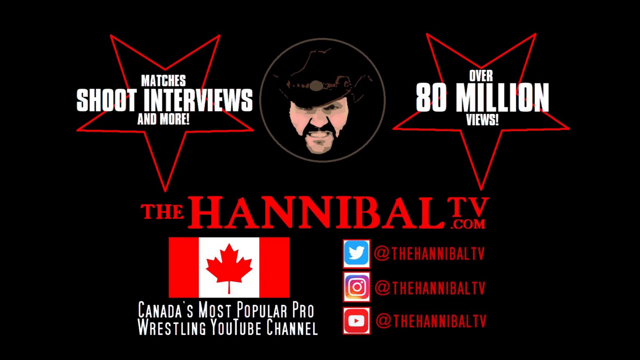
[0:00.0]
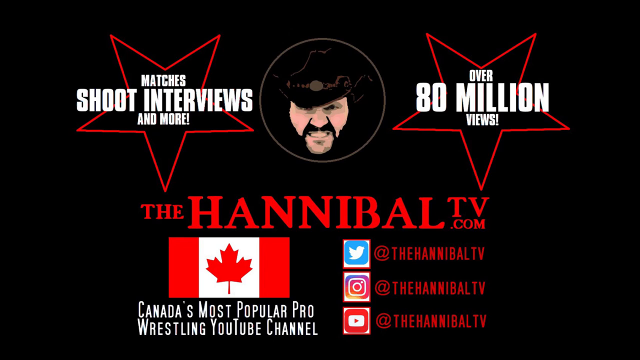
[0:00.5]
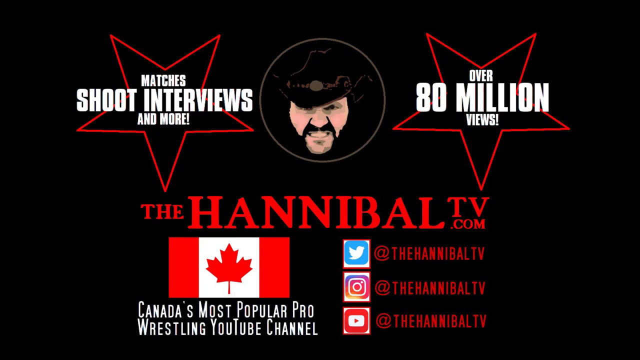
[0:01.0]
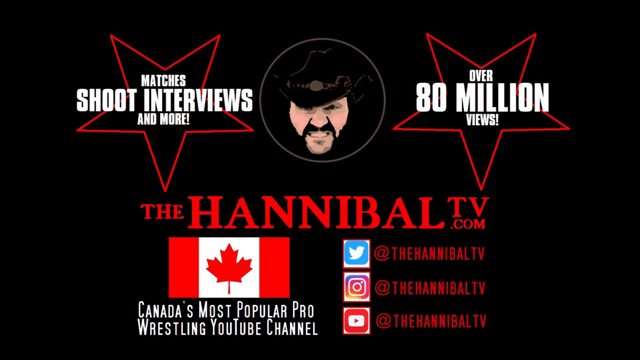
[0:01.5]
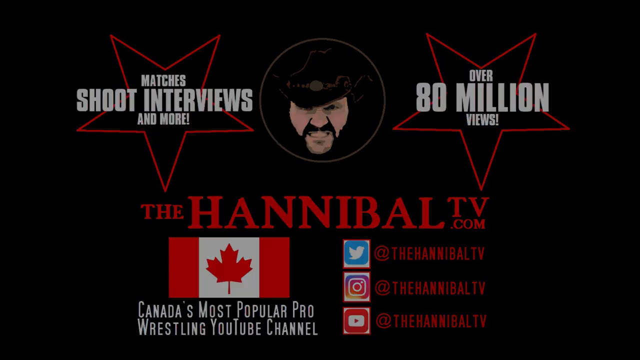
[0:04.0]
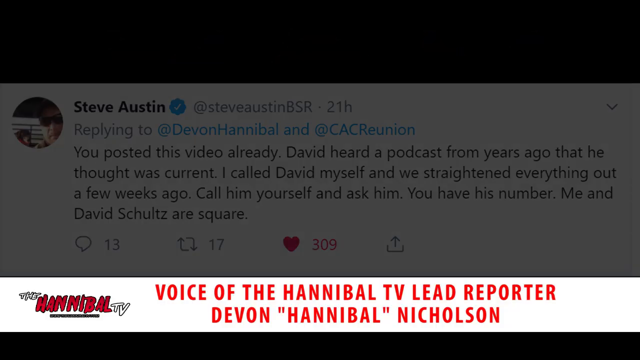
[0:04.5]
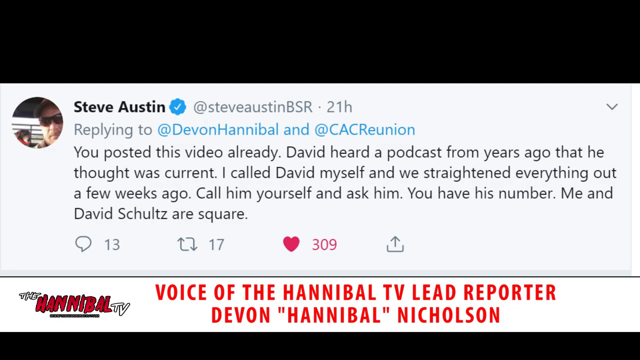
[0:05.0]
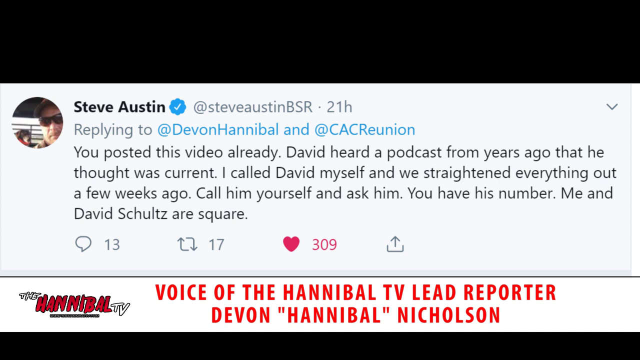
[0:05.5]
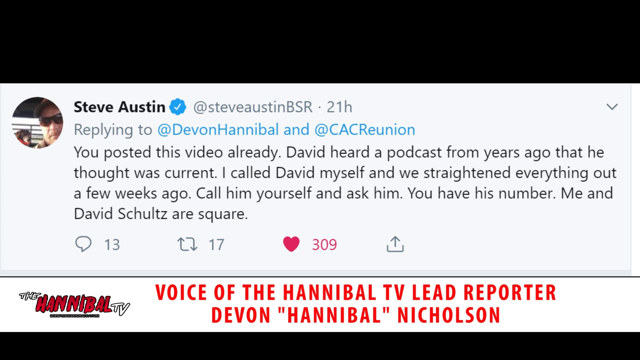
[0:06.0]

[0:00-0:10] The video opens on a black background with the outline of two stars at the top. On the left side, white text reads "matches shoot interviews and more!" and the other reads "over 80 million views!" There is an animated image of a man with a beard and mustache wearing a black cowboy hat, and underneath it red text reads "the HannibalTV.com". A Canadian flag appears on the left side below that, along with the words "Canada's most popular pro", and the screen notes that the person can be found on Twitter, Facebook and YouTube. This stays up for a few seconds, and then text appears reading "the voice of Hannibal TV lead reporter Devin Hannibal Nicholson".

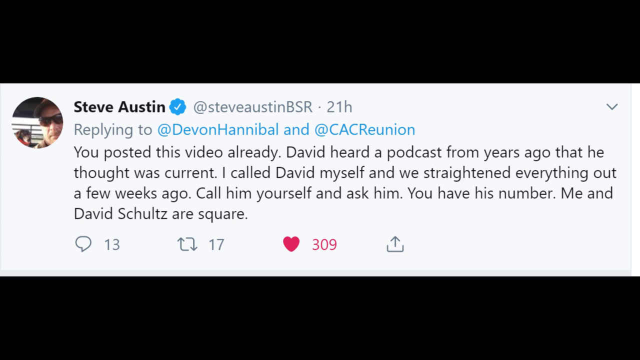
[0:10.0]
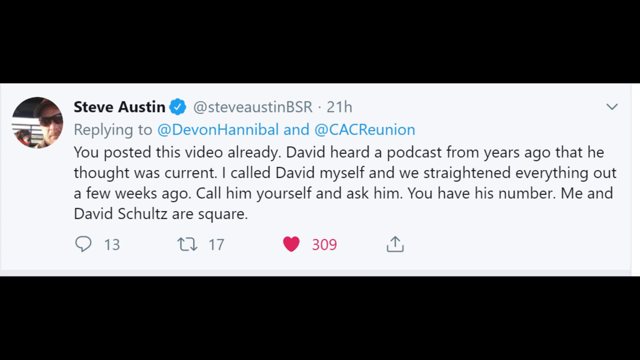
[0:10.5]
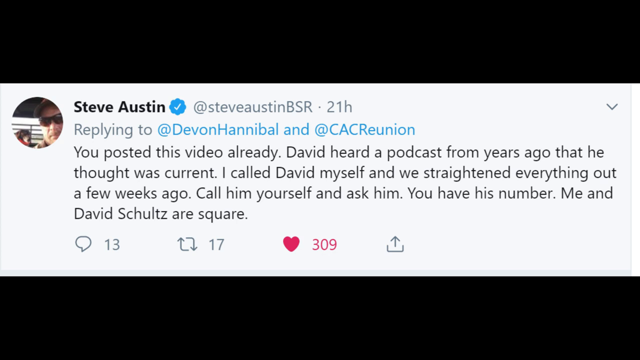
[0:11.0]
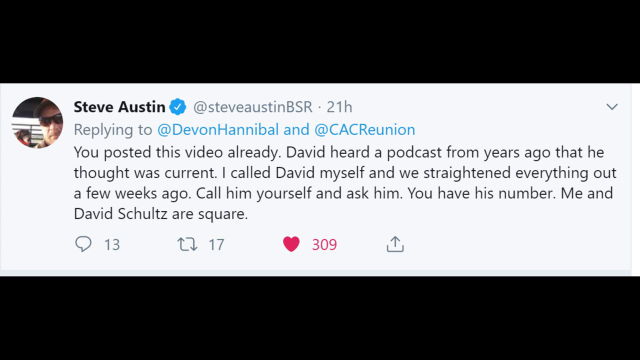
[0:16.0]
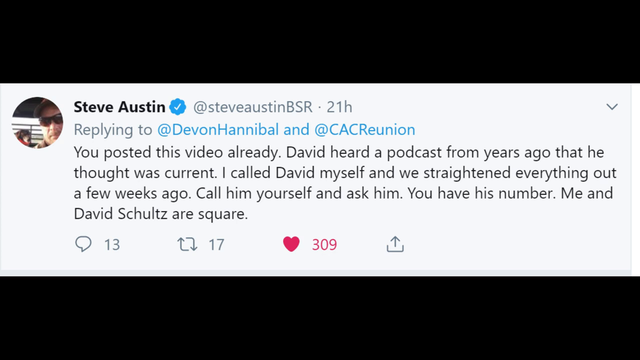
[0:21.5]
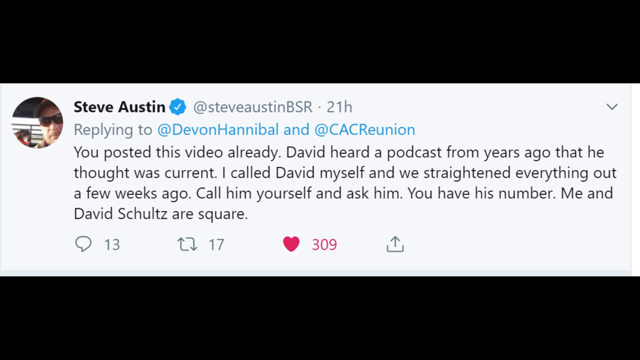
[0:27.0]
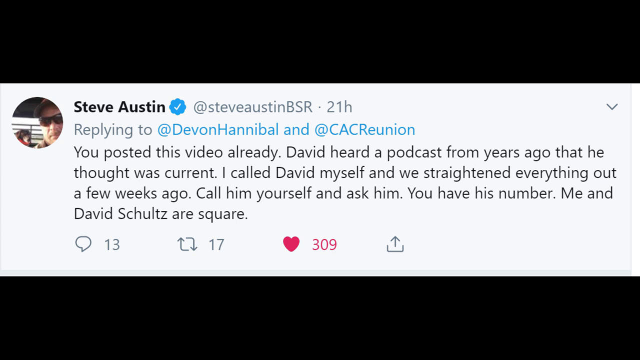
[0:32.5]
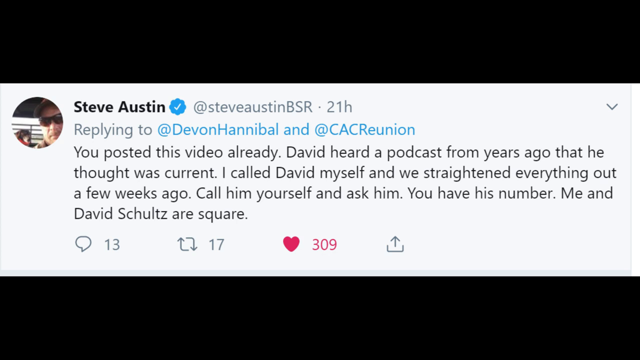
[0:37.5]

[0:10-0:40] A tweet from Steve Austin is shown, replying to Devin Hannibal and another account. In black, the tweet reads "you posted this video already. David heard a podcast from years ago that he thought was current. I called David myself and we straightened everything out a few weeks ago. Call him yourself and ask him. You have his number. Me and David Schultz". It has 13 comments, 17 retweets and 309 likes. Next to the name and handle, gray text reads "21H", showing it was posted 21 hours earlier. The tweet stays on screen for quite some time.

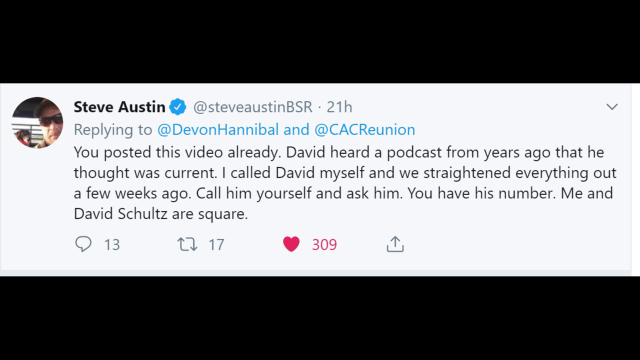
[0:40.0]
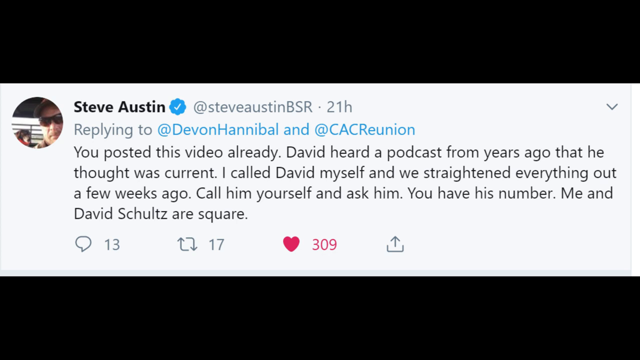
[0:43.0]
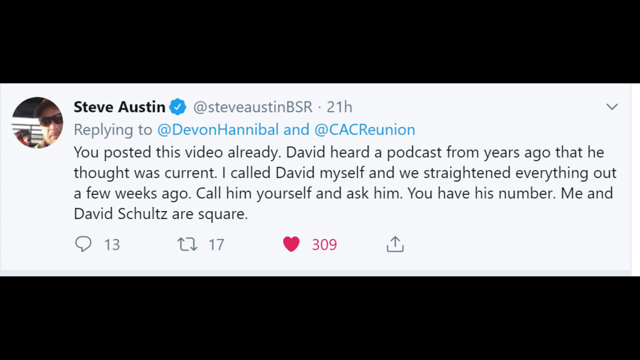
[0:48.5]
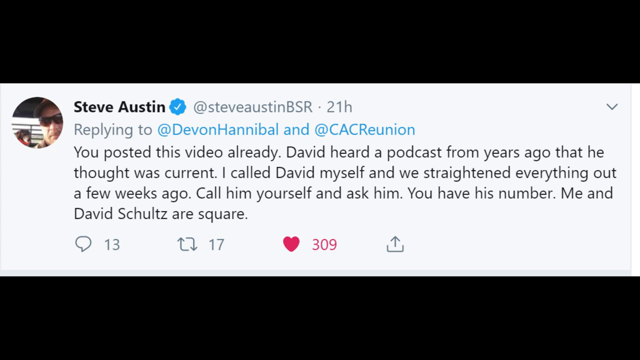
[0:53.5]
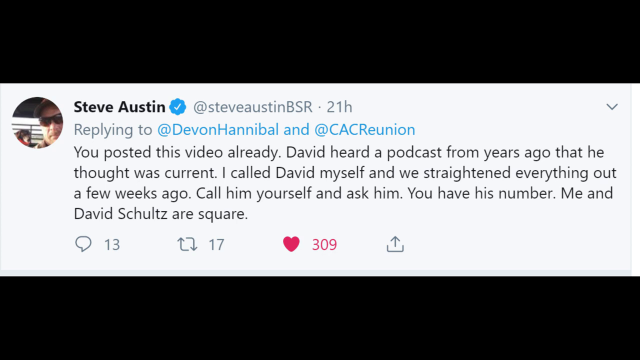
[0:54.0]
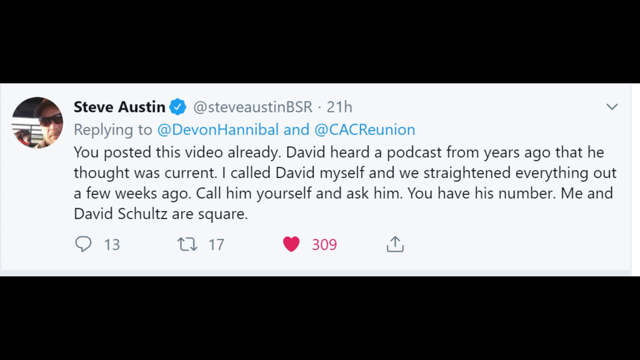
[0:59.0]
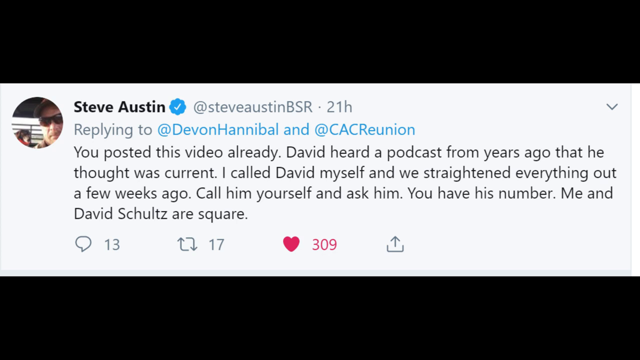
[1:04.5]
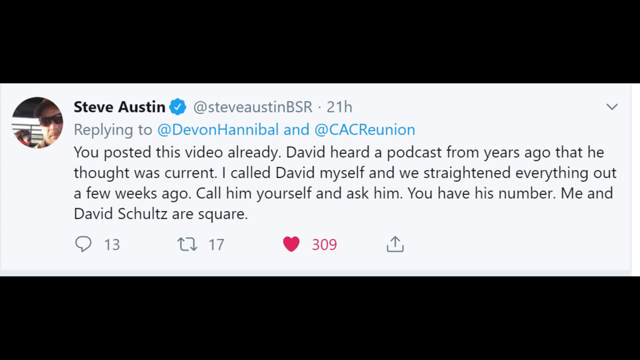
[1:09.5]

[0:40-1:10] Steve Austin's tweet remains on screen. His account has a verified check mark, a blue circle with a white check on it, and the handle is "@SteveAustinBSR", posted 21 hours ago. In blue, "Replying to" shows "Devon Hannibal". In black, the tweet reads "you posted this video already. David heard a podcast from years ago that he thought was current. I called David myself and we straightened everything out a few weeks ago. Call him yourself and ask. You have his number. Me and David Schultz". At the bottom there is a text box for a reply message. The tweet has 13 comments, 17 retweets and 309 likes.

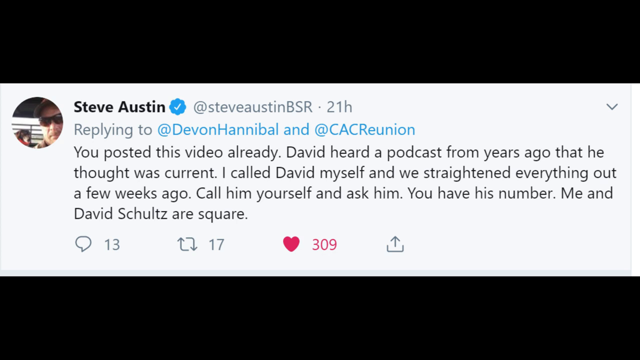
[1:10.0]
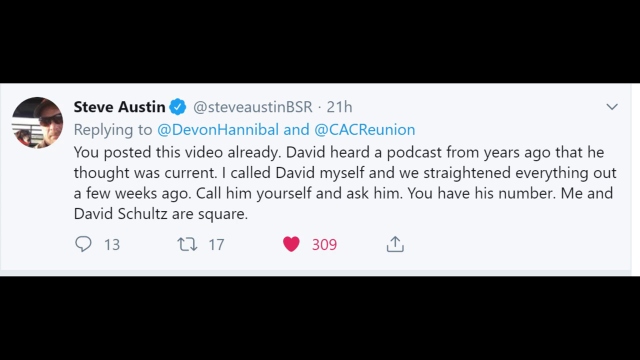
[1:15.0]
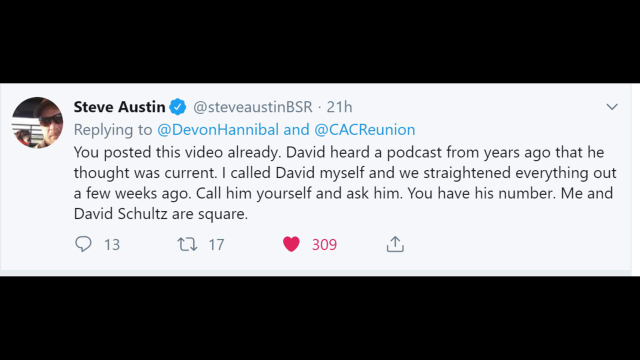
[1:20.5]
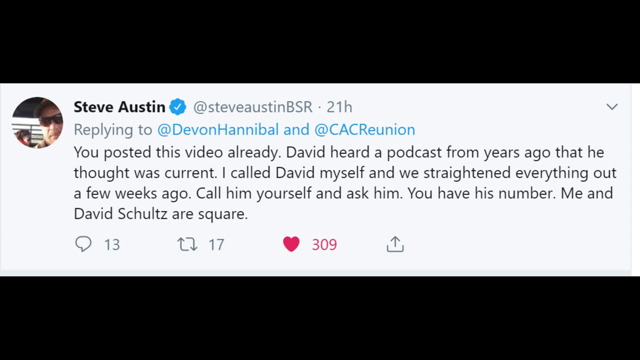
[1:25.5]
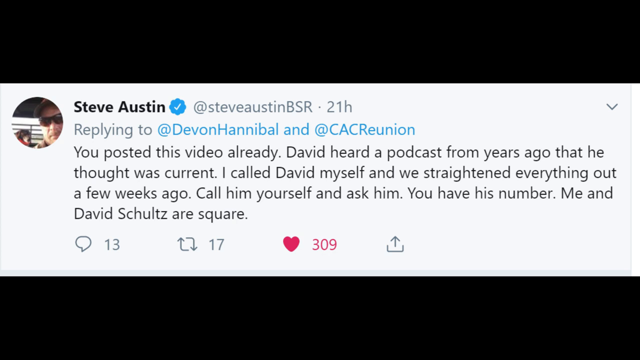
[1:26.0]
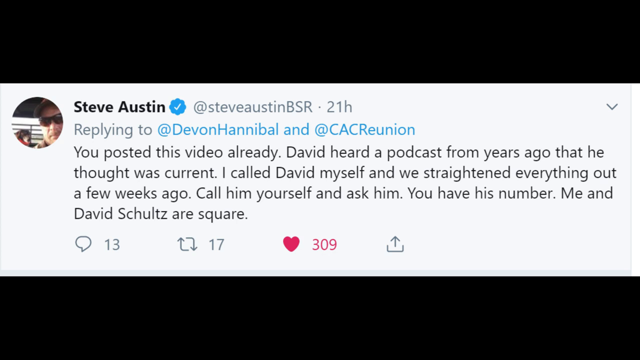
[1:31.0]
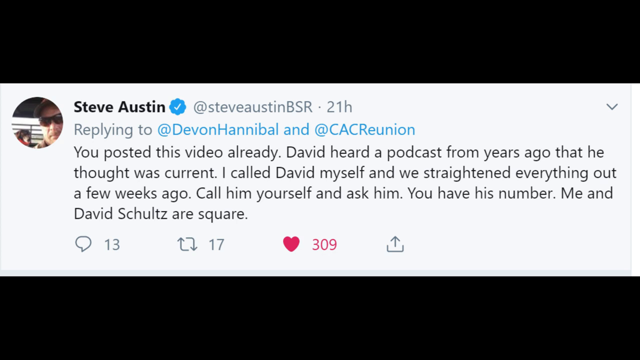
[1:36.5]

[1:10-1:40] A tweet from Steve Austin is on screen almost the entire time. It reads "You posted this already. David heard a podcast from years ago that he thought was current." followed by "I called David myself and we straightened everything out a few weeks ago. Call him yourself and ask him. You have his number. Me and David Schultz". The tweet shows it was posted about 21 hours before the screenshot was taken.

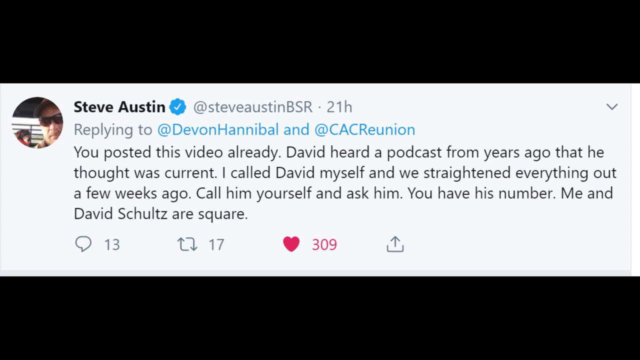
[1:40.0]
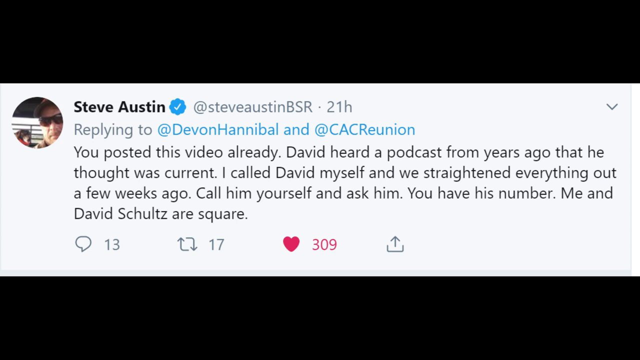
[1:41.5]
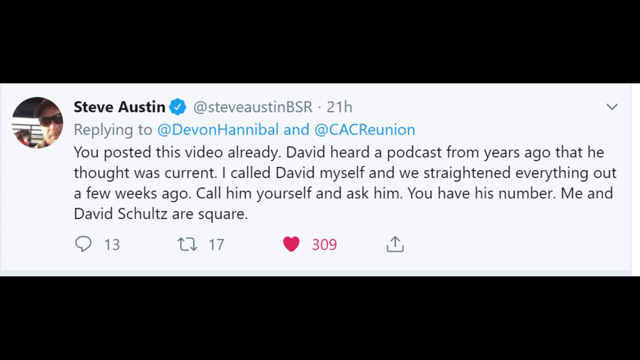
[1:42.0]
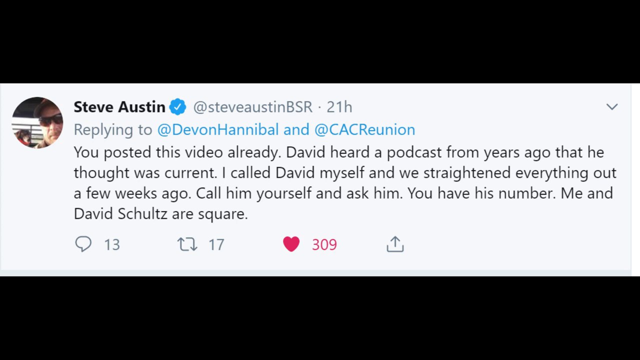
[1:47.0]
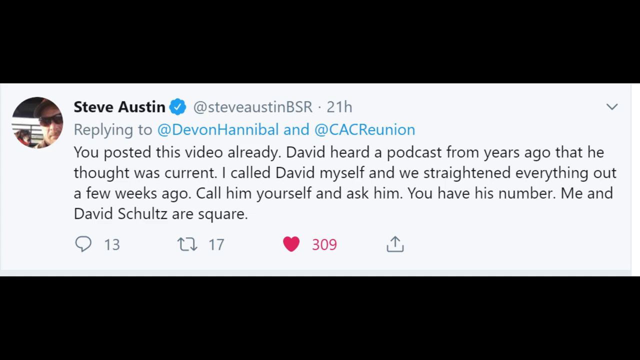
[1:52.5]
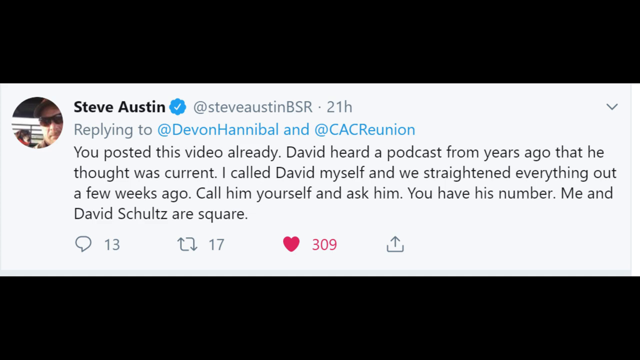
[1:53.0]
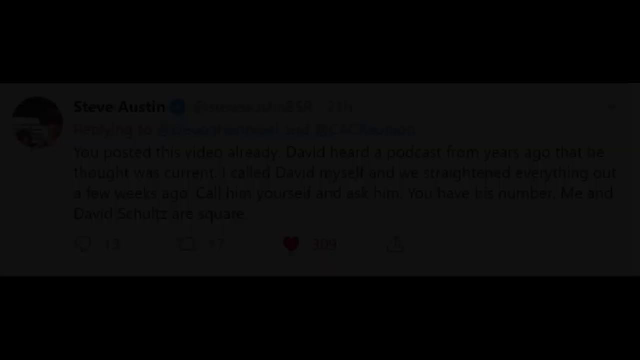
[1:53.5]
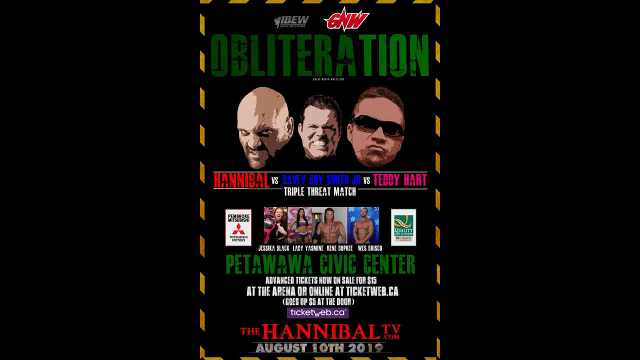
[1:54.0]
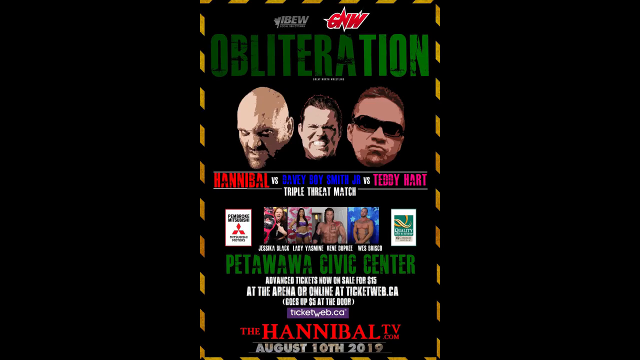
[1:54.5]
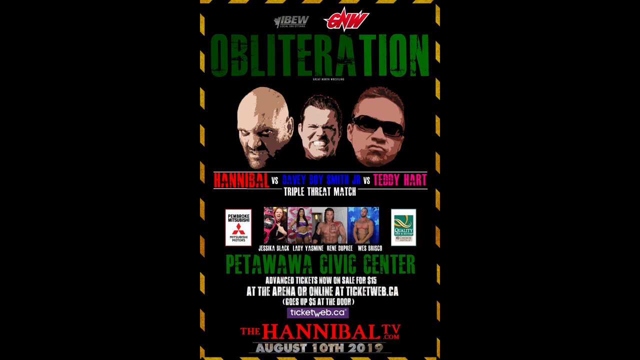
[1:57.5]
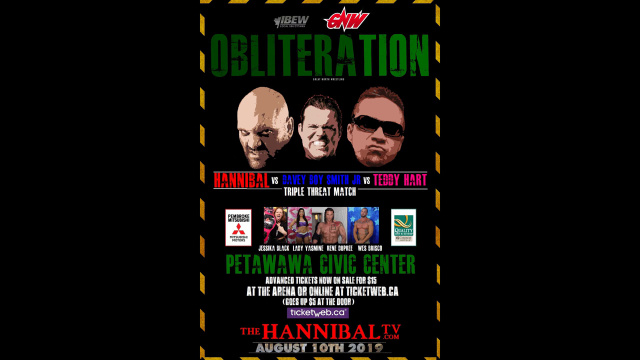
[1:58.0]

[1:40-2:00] The tweet from Steve Austin is still shown. There is a blue circle with a white checkmark, and to its right is the handle, with a hat symbol followed by "STEVEAUSTIN" in capital letters and "BSR". The tweet was posted 21 hours before the screenshot. "Replying to" is followed in blue by "Devon Hannibal" and a hat symbol with "CACVUNION". In black, the tweet reads "you posted this video already. David heard a podcast from years ago that he thought was current. I called David myself and we straightened everything out a few weeks ago. Call him yourself and ask him. You have his number. Me and David Schultz", the last sentence of the tweet.